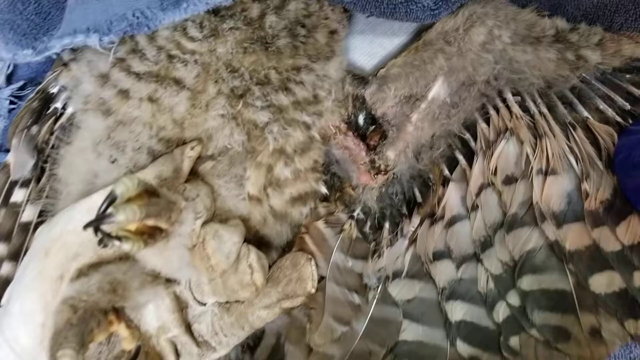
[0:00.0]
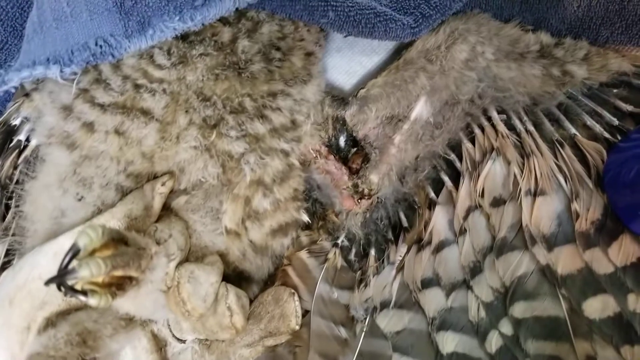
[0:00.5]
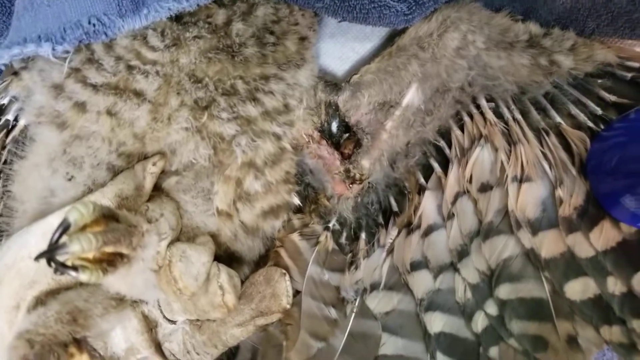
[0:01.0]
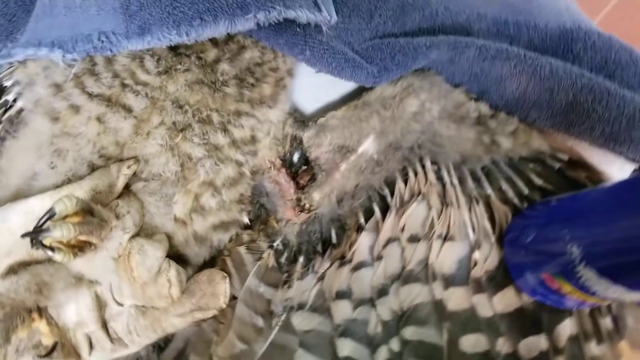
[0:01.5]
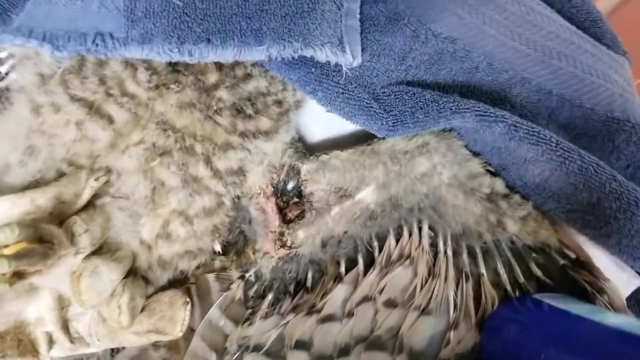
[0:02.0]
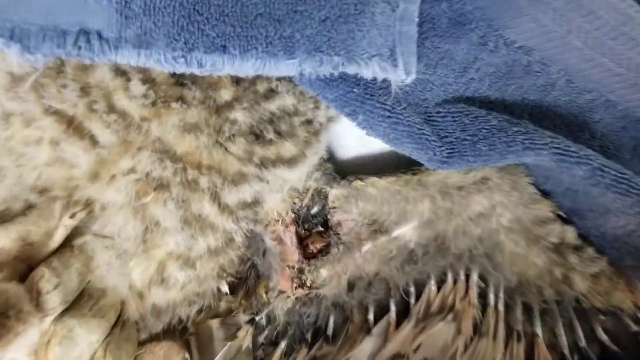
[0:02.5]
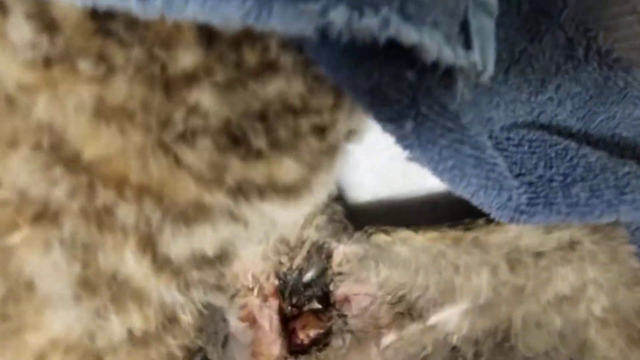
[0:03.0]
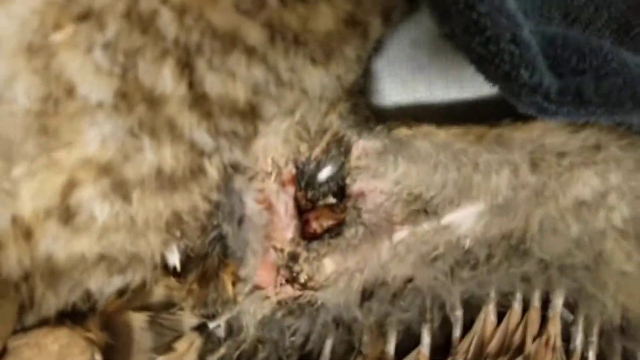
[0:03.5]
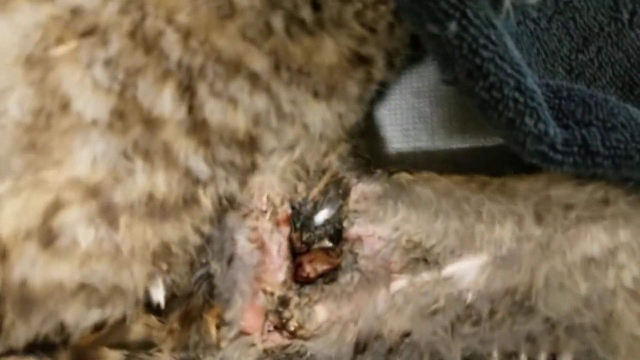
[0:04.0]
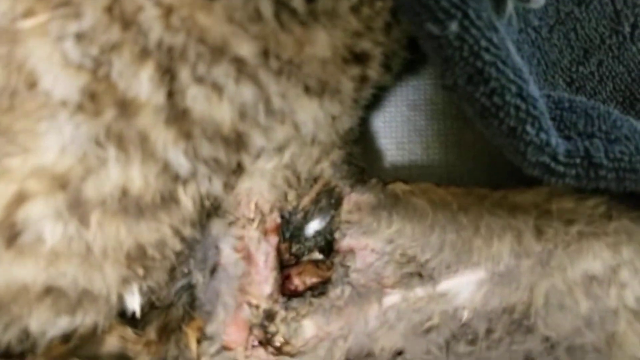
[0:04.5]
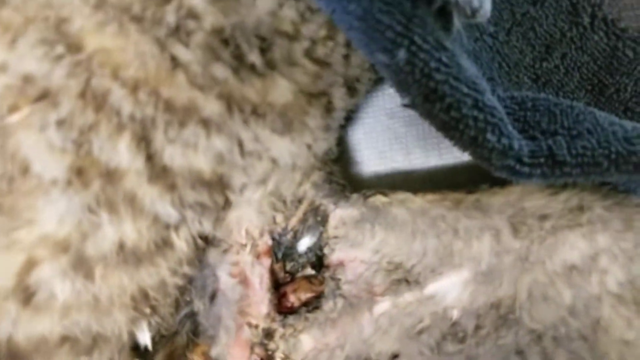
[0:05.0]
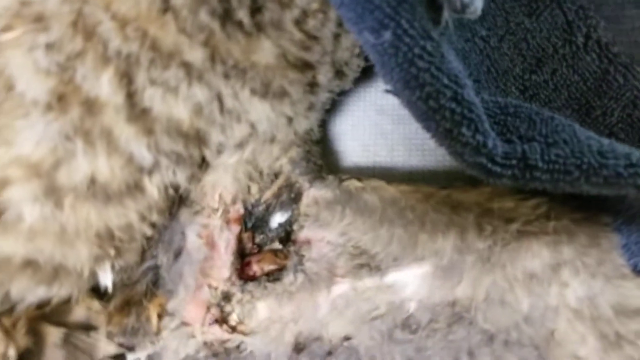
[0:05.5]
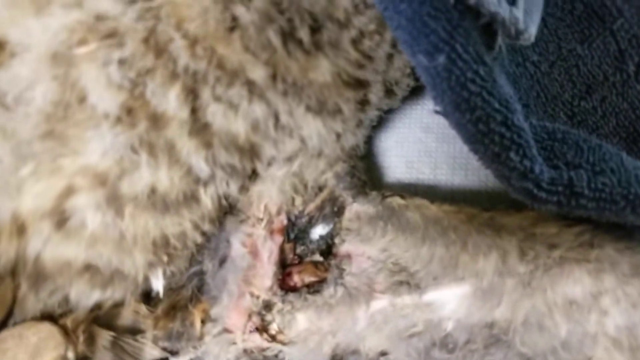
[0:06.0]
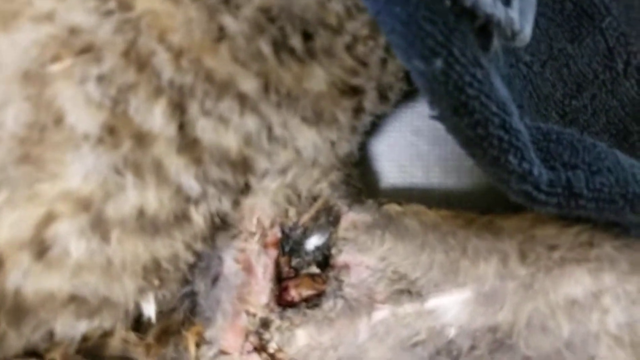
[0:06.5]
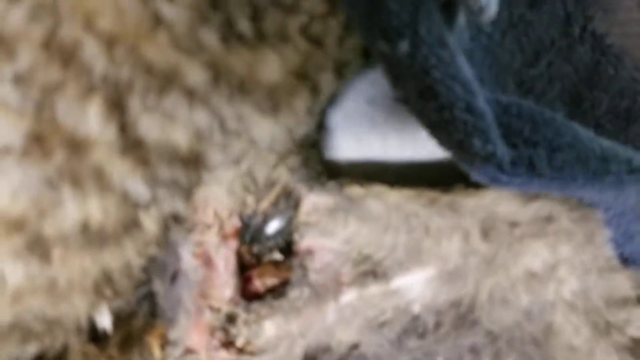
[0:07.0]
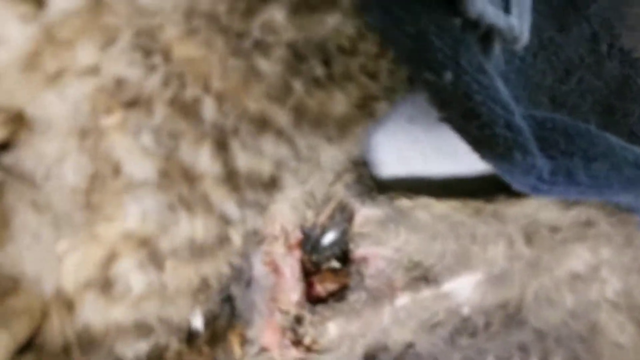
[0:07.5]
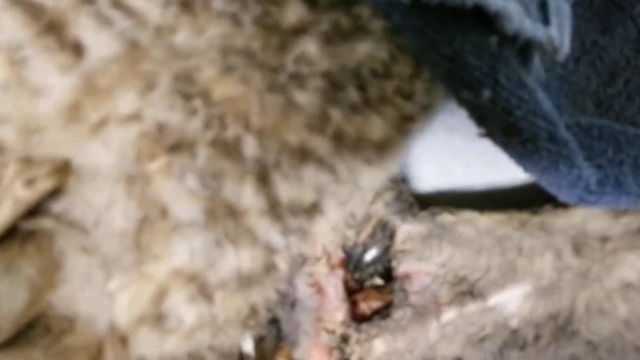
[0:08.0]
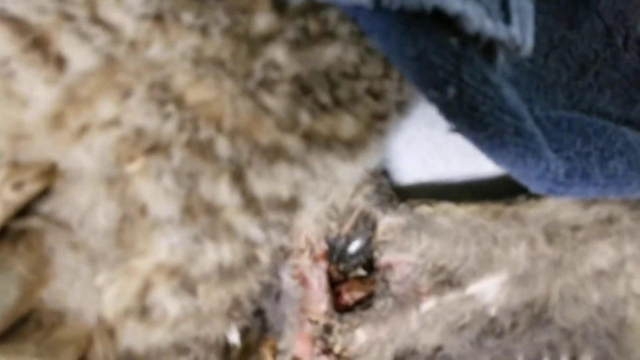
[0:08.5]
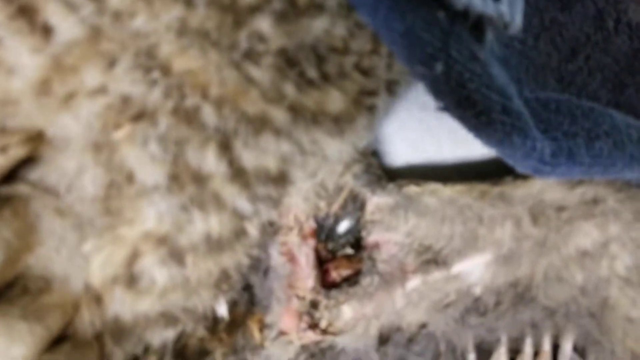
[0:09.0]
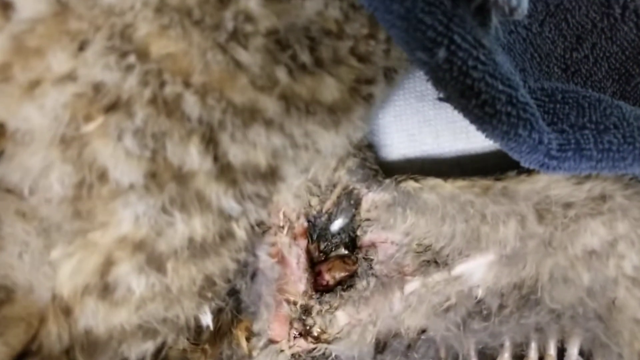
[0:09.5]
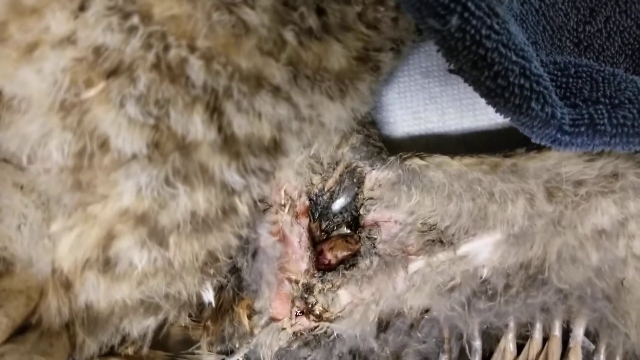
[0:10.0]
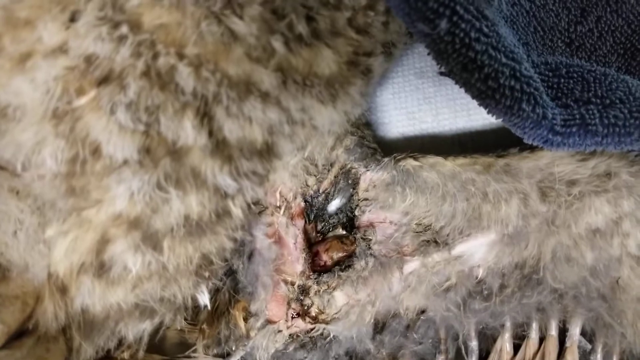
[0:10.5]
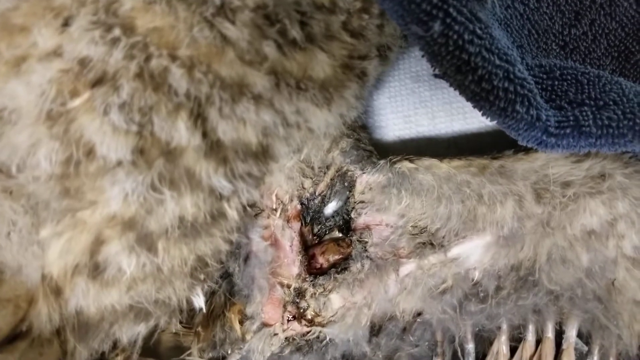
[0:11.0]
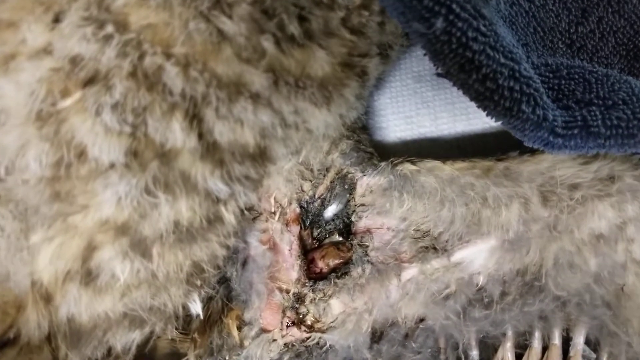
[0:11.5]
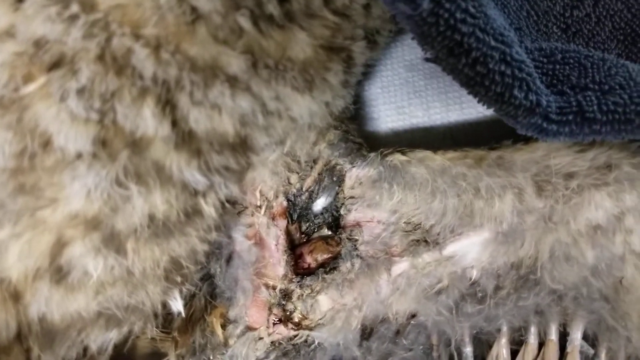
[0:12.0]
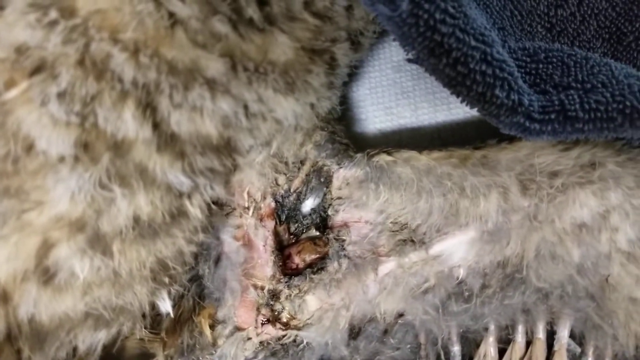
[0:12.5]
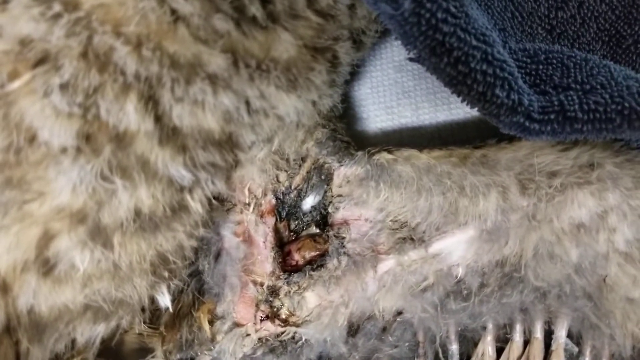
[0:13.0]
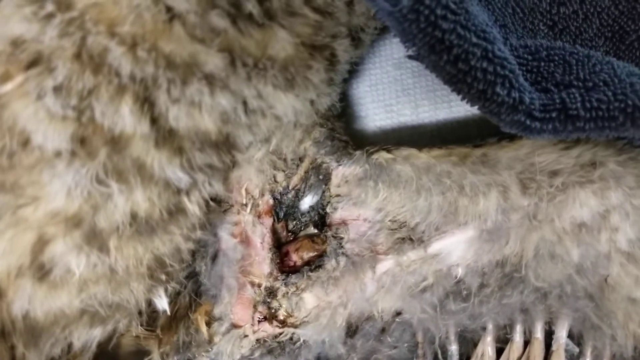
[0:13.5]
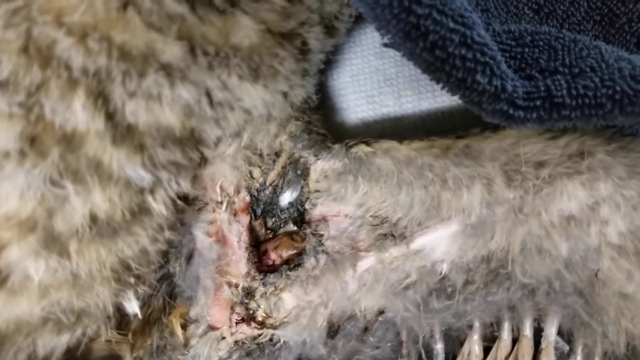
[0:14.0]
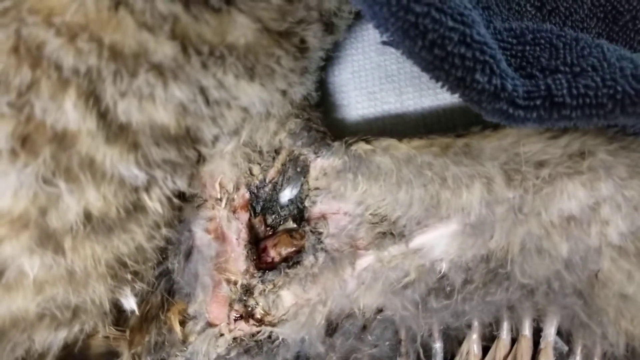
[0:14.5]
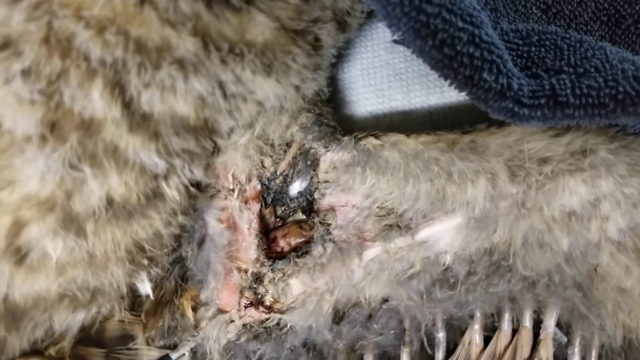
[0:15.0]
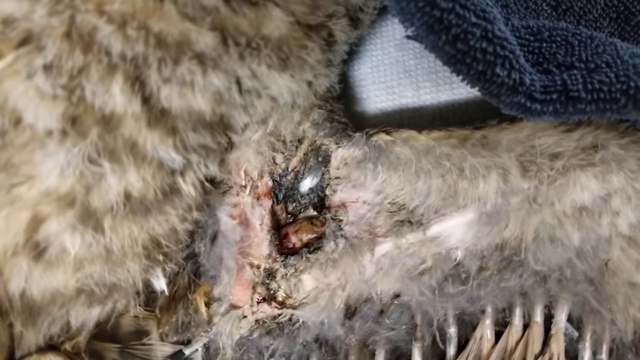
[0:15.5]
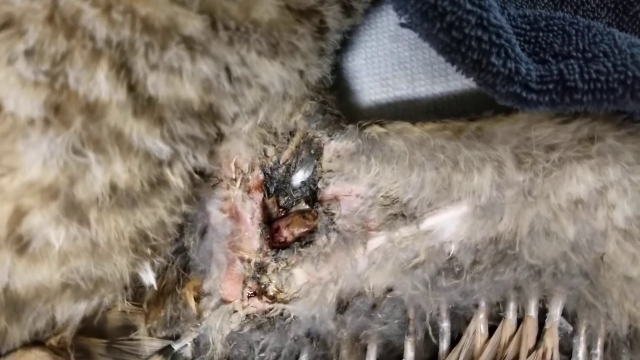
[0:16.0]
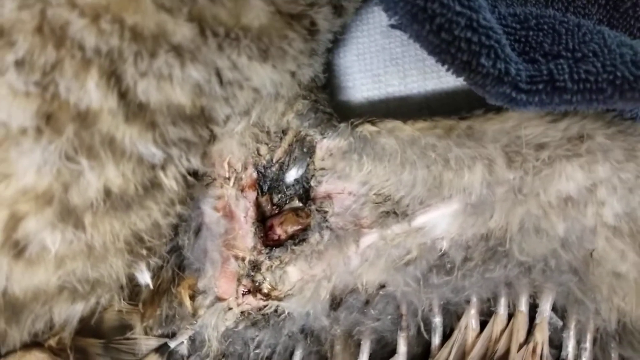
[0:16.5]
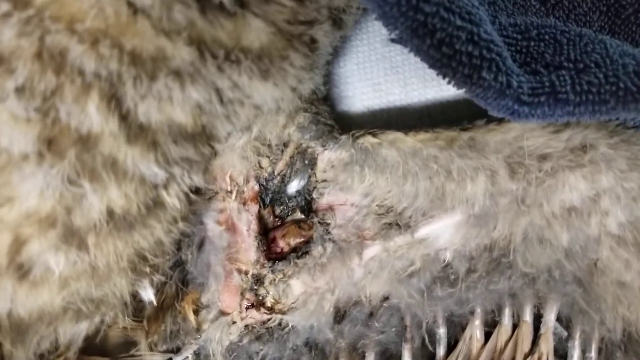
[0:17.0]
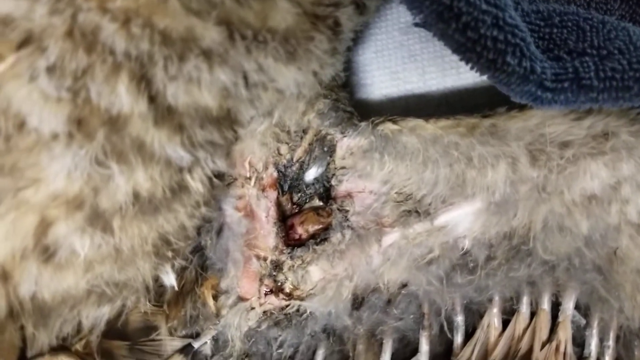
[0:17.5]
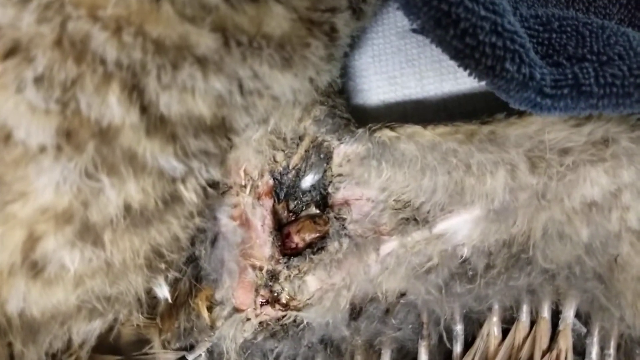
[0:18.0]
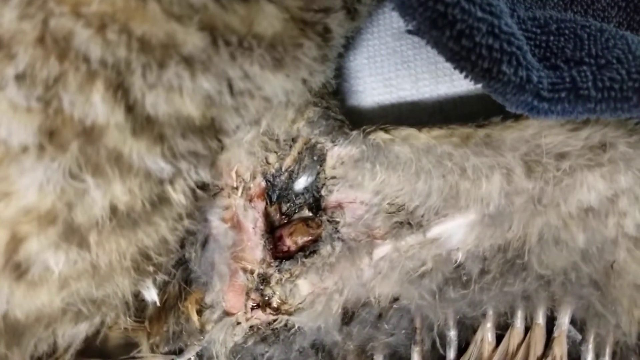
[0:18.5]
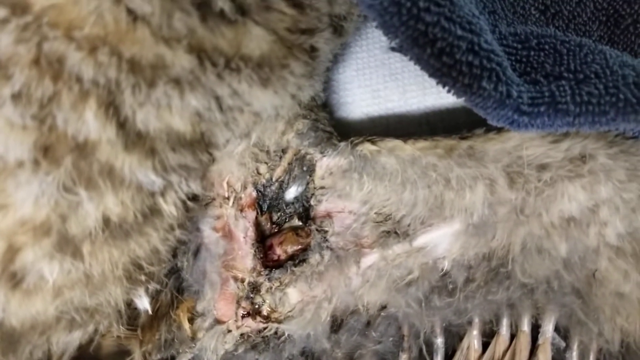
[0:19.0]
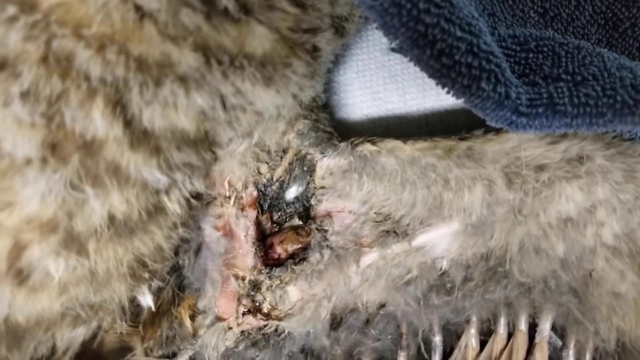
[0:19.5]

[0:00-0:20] What appears to be some kind of animal is shown, apparently with feathers and some fur. The feathers are kind of at the bottom of the screen and the fur is in the top half, and part of what appears to be a towel is right at the top of the screen above the fur. On the left there appear to be talons of some sort, with feathers to the right and also on the far left, so this appears to be some kind of bird, perhaps wounded. The camera moves around, kind of rotating right, and is moved closer into the furry section, where there appears to be some kind of wound. The image is blurry for a moment, then comes into focus, but the wound remains unclear: some kind of cut in the fur, with what seem to be fleshy portions.